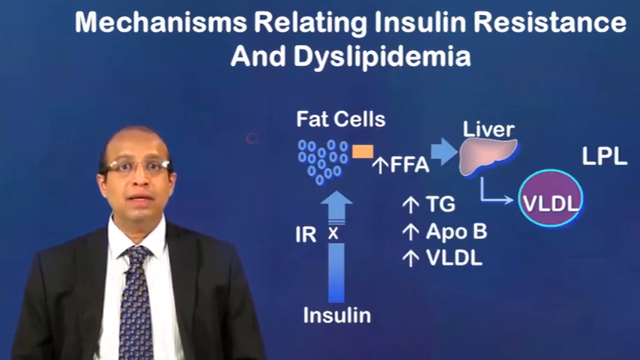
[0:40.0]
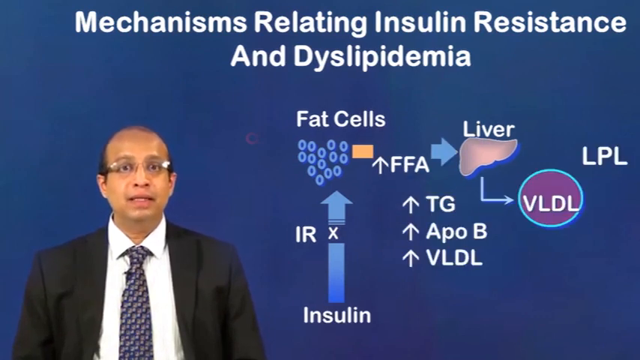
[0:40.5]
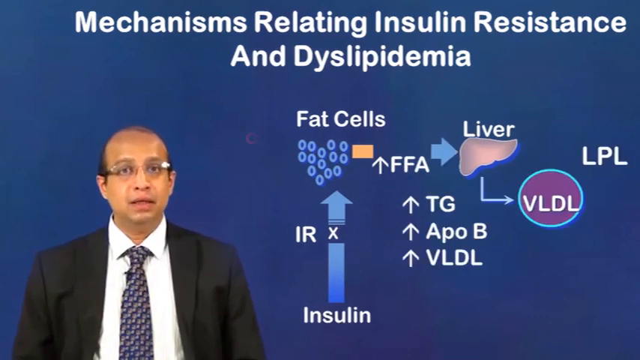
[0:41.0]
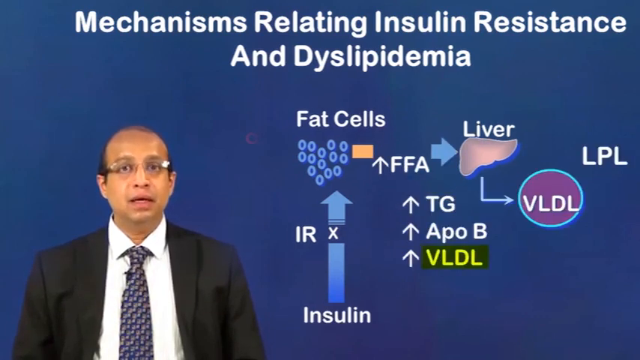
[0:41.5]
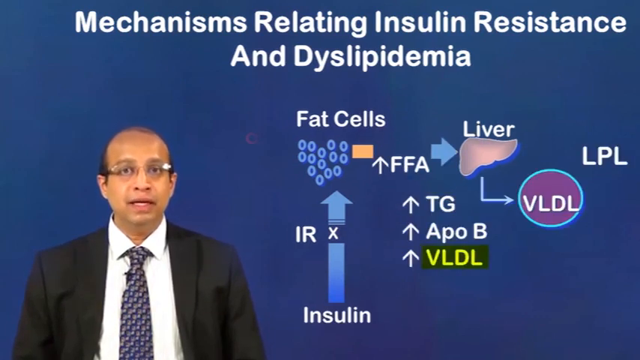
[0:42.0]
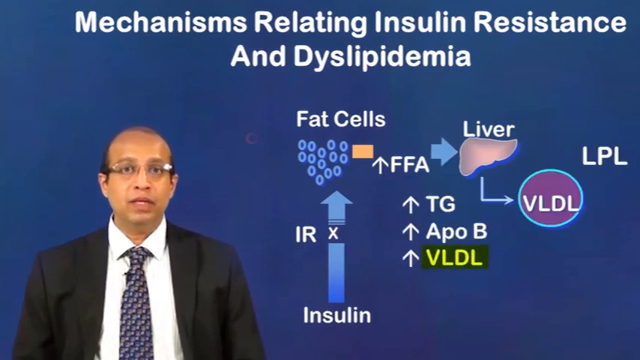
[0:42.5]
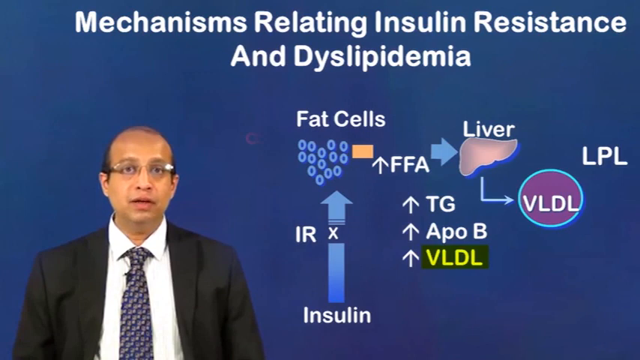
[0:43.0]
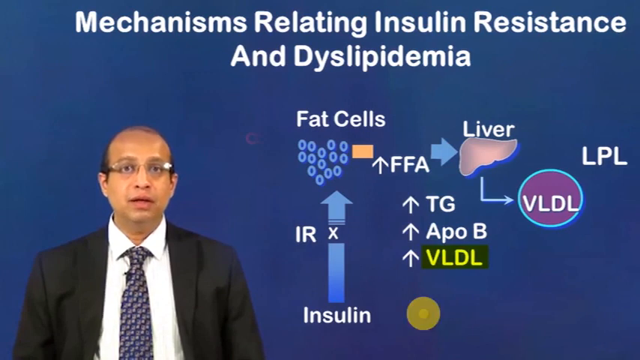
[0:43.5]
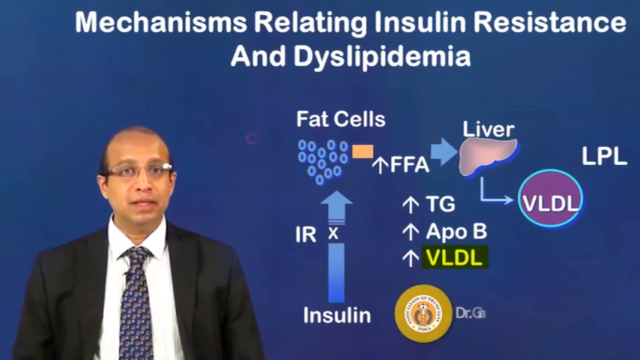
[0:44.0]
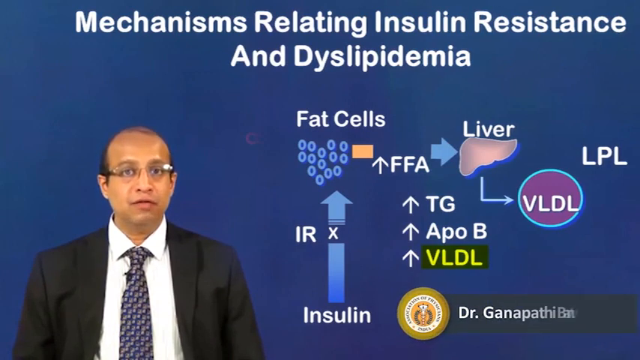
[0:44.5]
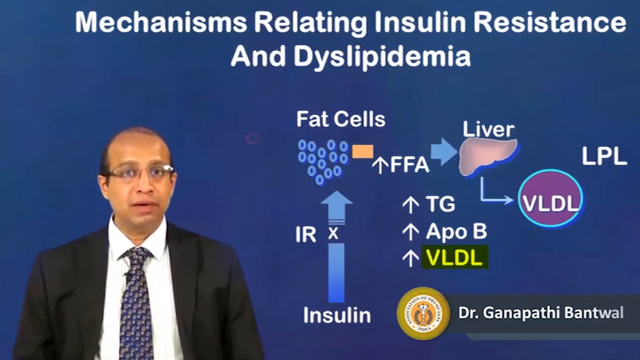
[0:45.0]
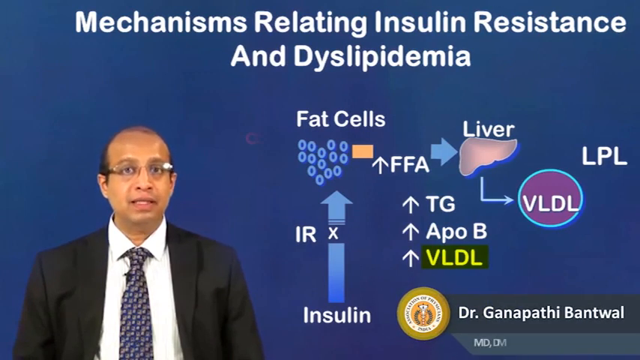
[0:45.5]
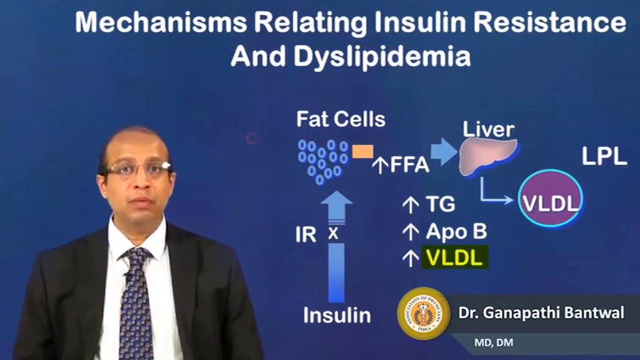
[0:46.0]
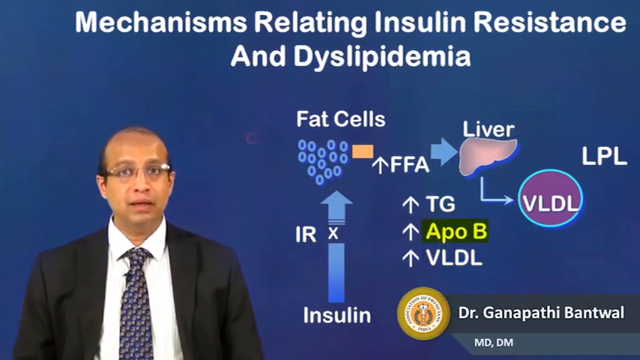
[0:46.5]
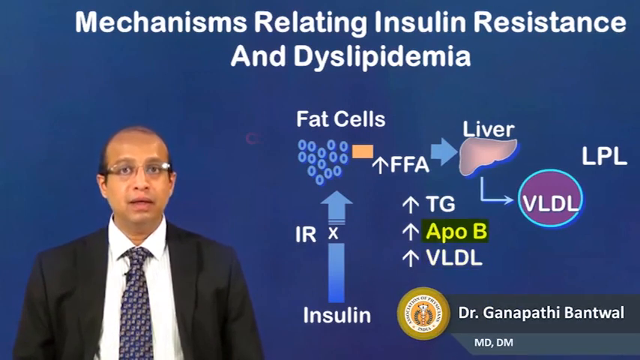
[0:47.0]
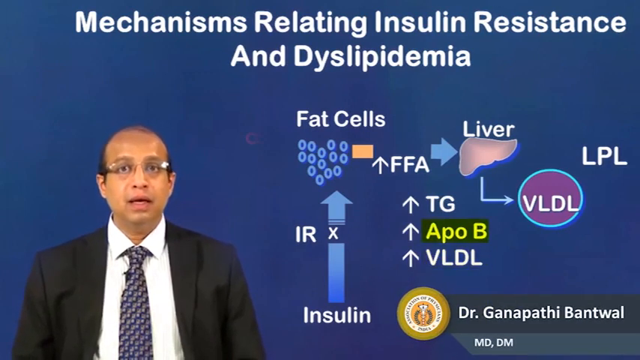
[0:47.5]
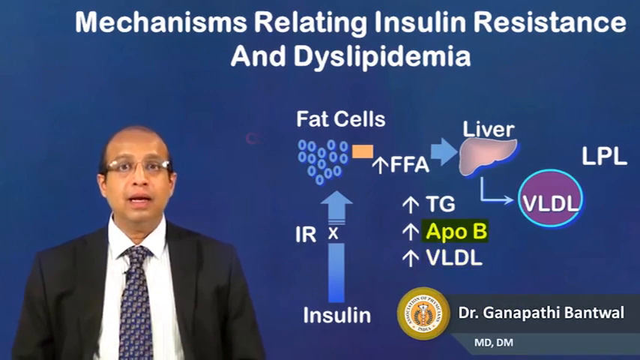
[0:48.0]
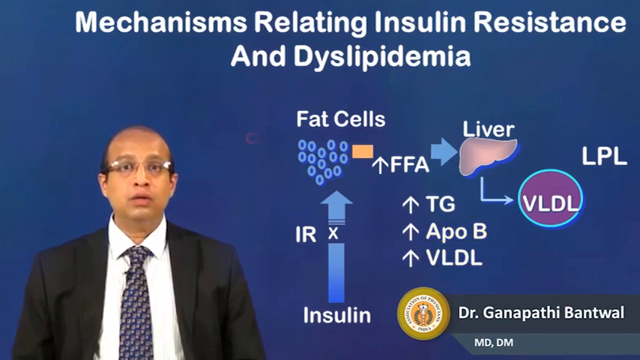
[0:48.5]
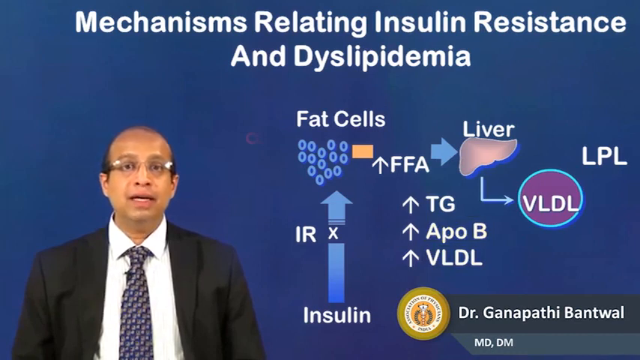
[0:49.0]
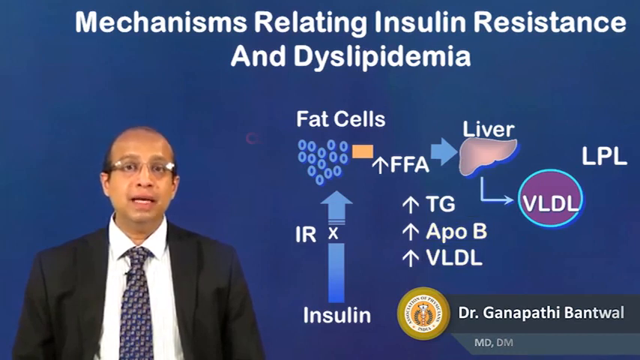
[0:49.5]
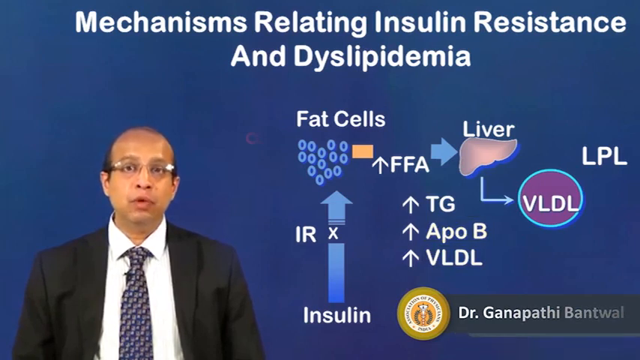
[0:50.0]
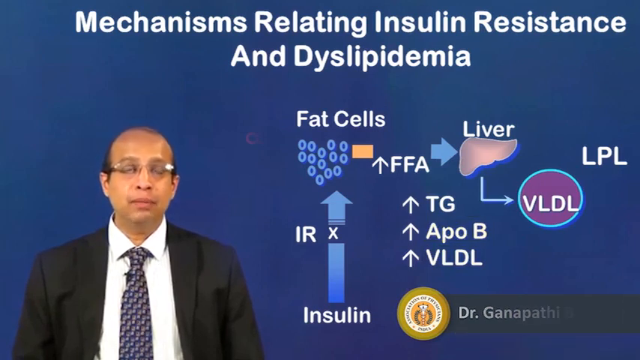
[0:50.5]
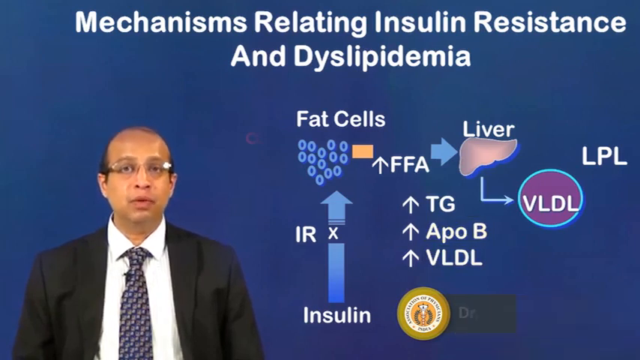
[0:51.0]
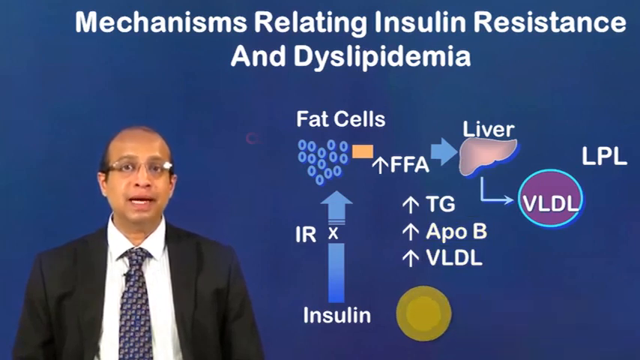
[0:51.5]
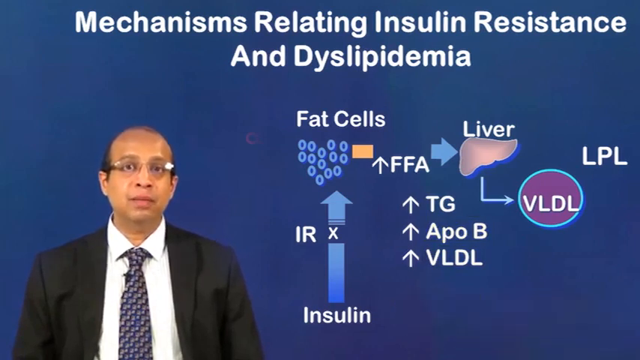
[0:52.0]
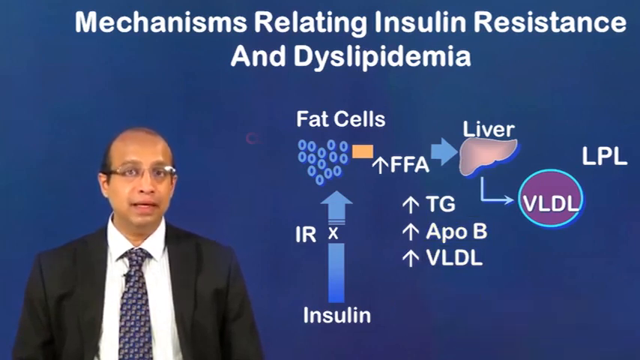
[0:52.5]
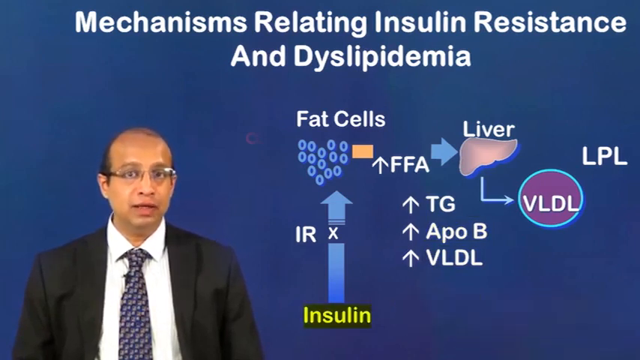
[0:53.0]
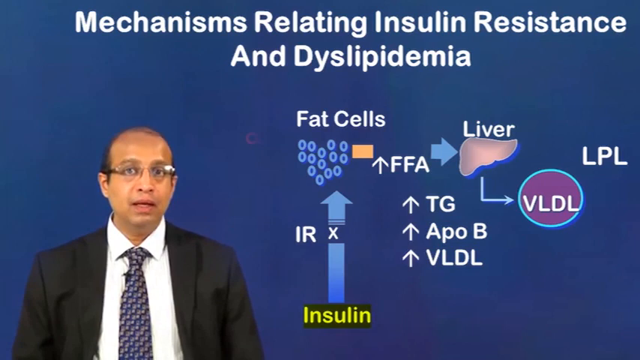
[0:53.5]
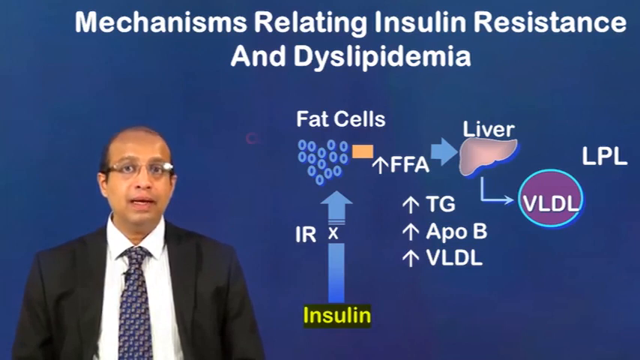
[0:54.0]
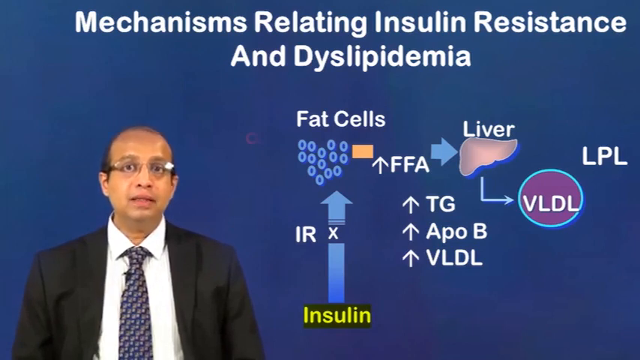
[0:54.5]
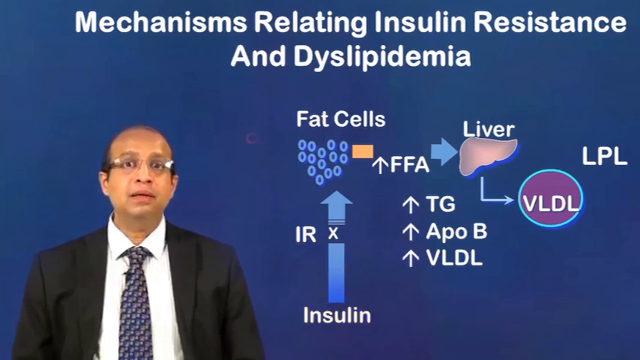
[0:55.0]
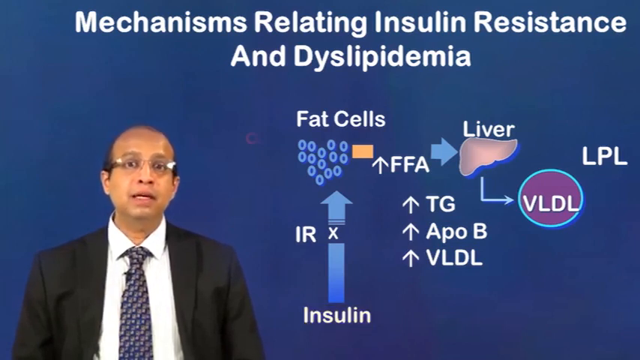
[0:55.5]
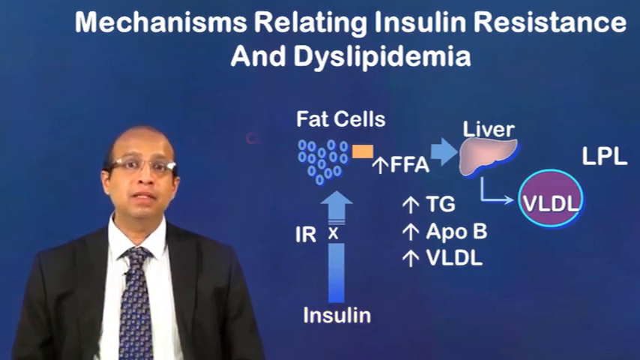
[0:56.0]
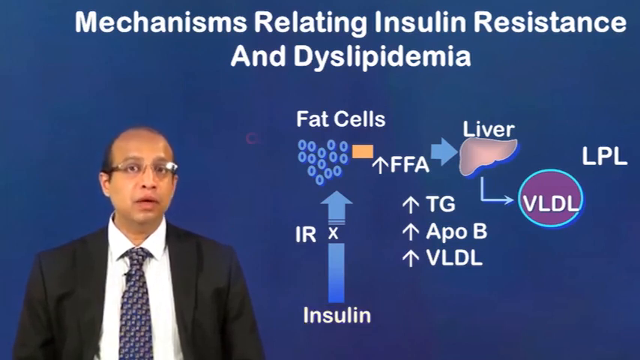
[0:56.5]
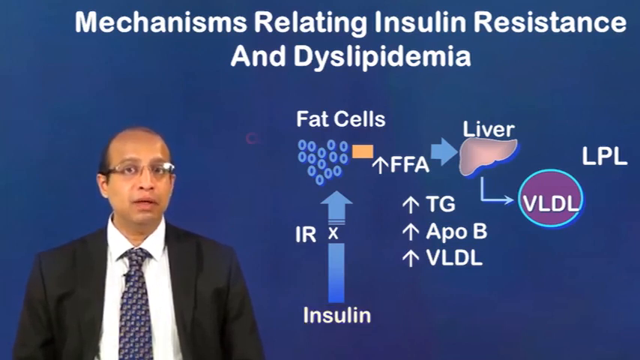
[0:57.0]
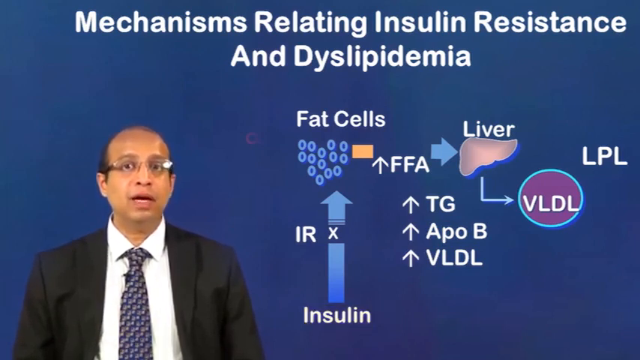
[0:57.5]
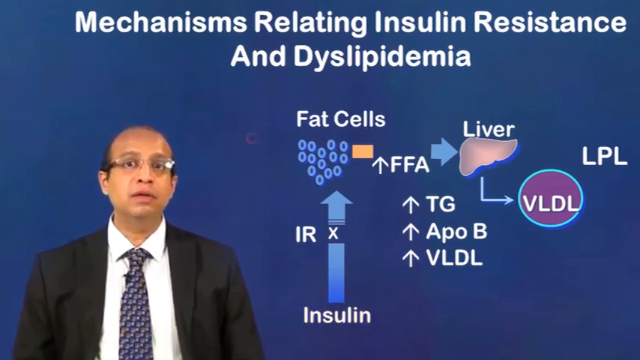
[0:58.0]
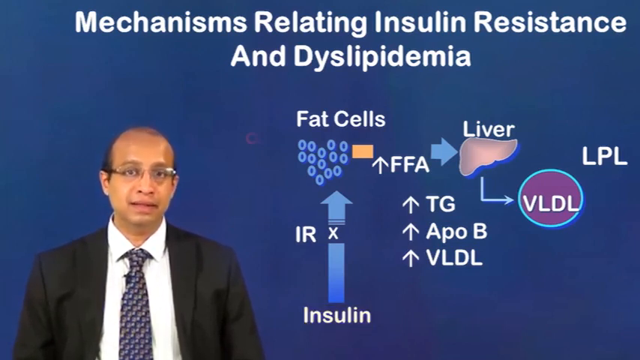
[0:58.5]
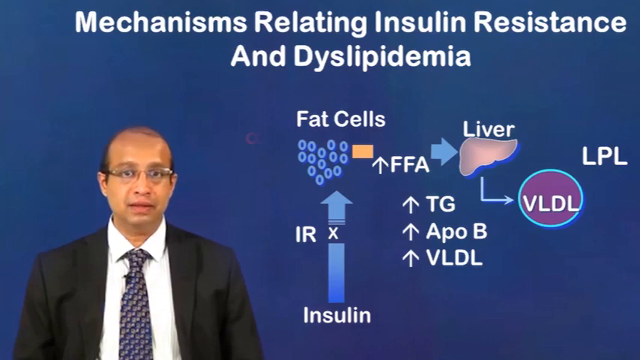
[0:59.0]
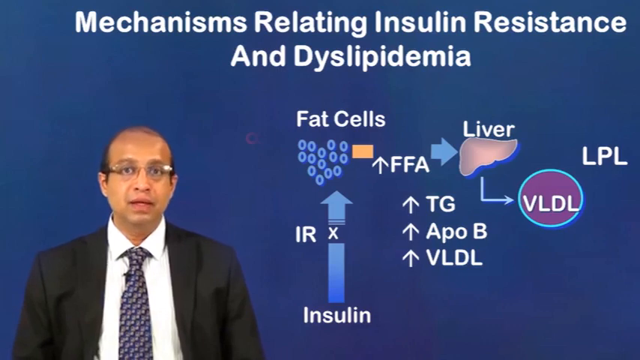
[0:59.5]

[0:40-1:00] The doctor continues while the VLDL abbreviation is highlighted within the insulin resistance pathway, which is shown on the right-hand side of the screen as before. A pop-up with the doctor's name appears again partway through. Otherwise nothing changes apart from this part of the pathway being highlighted.